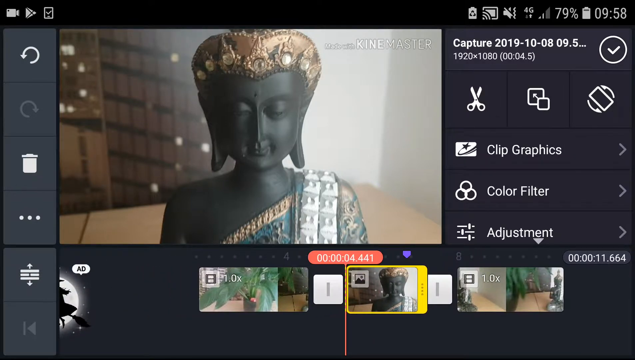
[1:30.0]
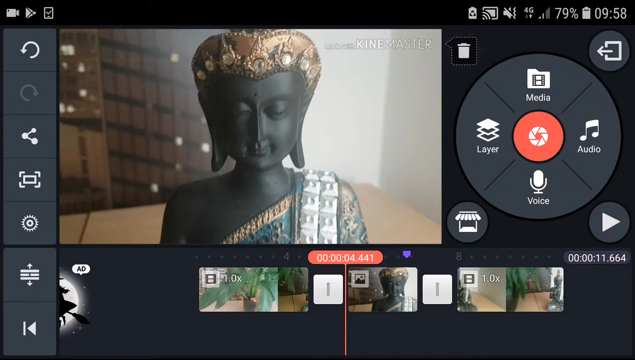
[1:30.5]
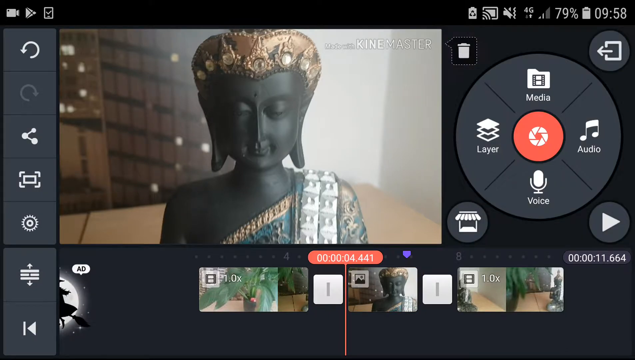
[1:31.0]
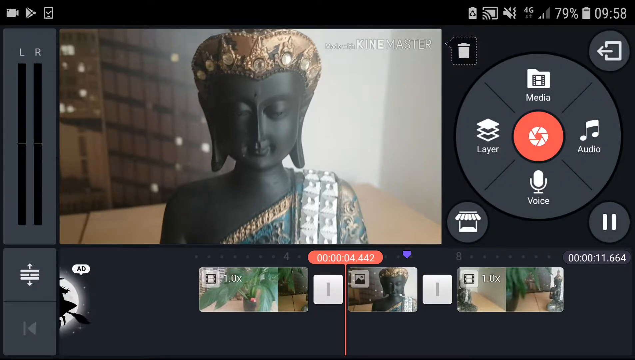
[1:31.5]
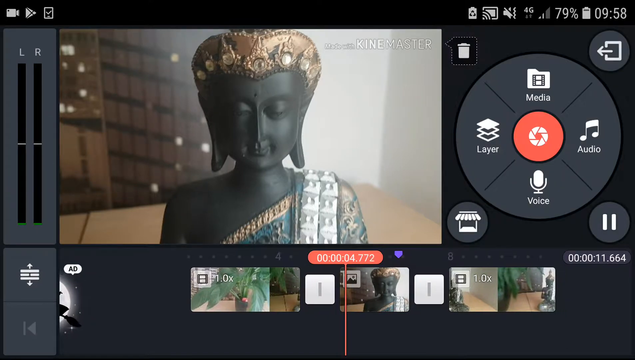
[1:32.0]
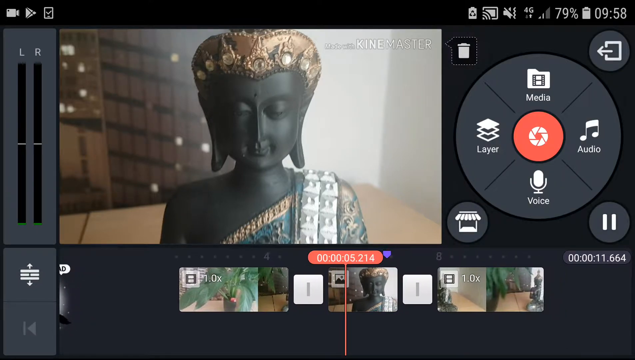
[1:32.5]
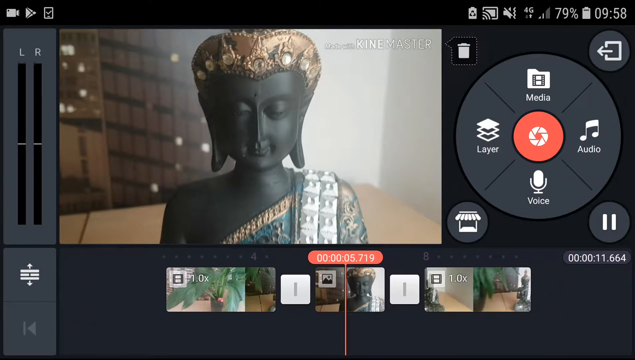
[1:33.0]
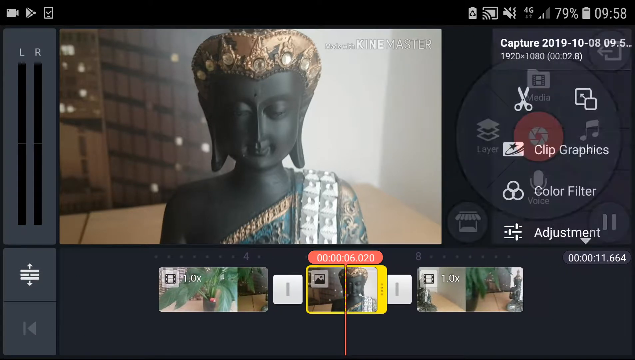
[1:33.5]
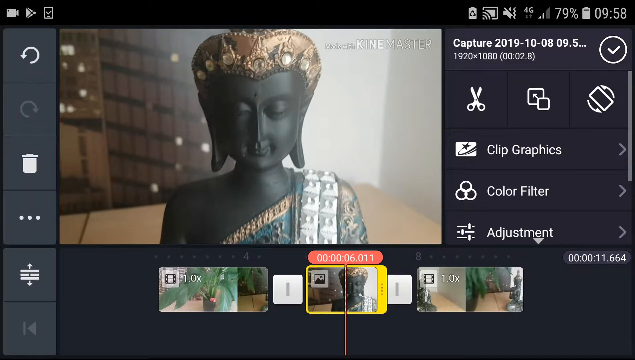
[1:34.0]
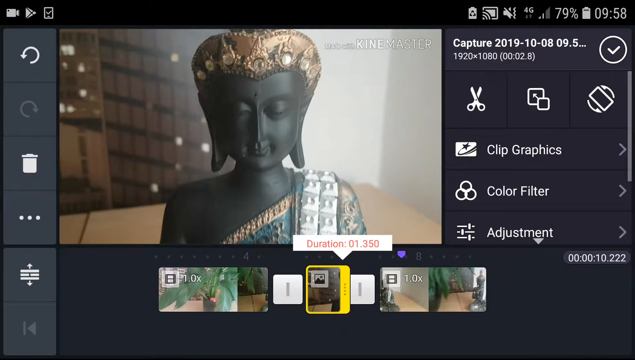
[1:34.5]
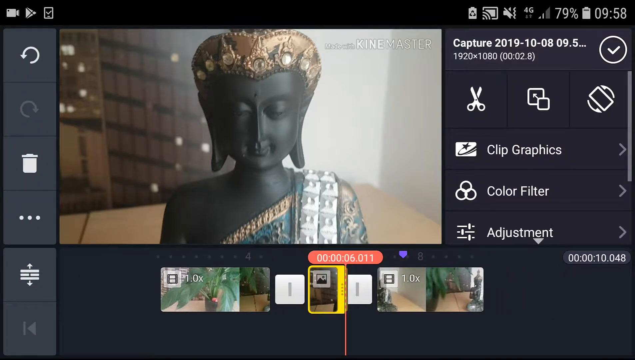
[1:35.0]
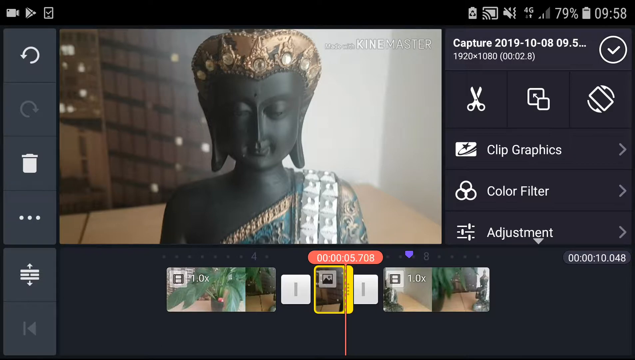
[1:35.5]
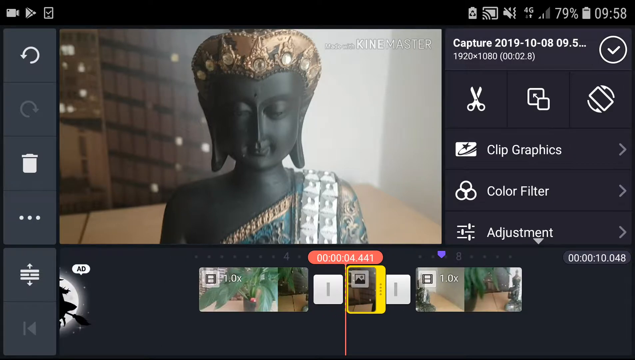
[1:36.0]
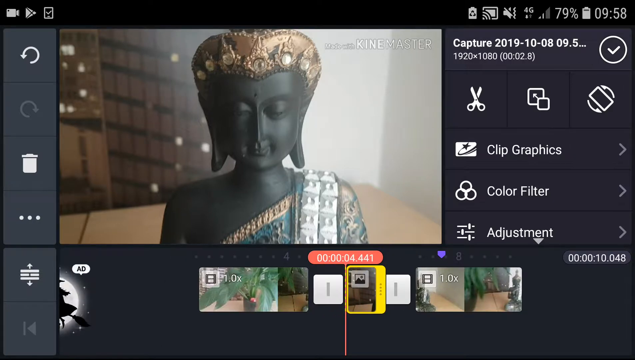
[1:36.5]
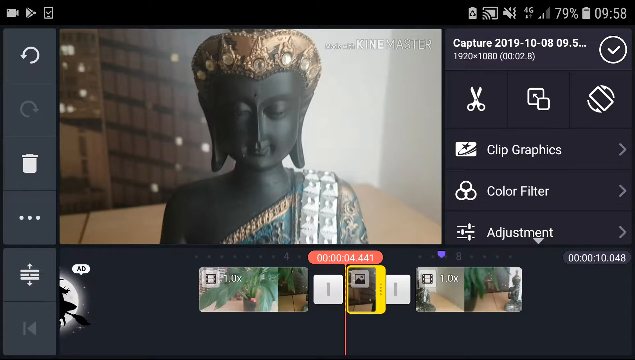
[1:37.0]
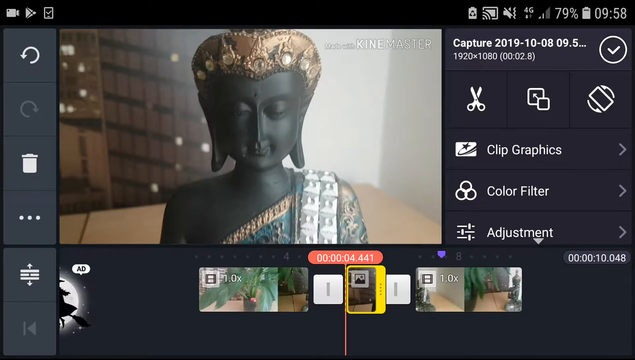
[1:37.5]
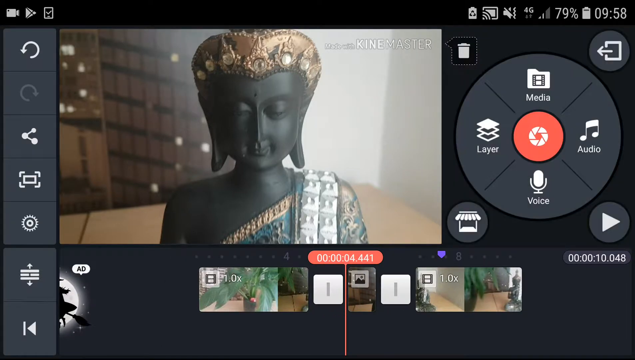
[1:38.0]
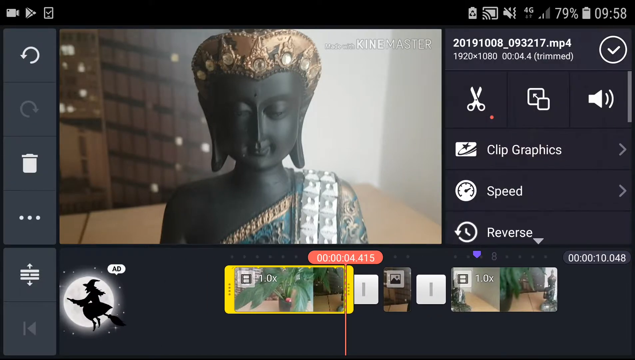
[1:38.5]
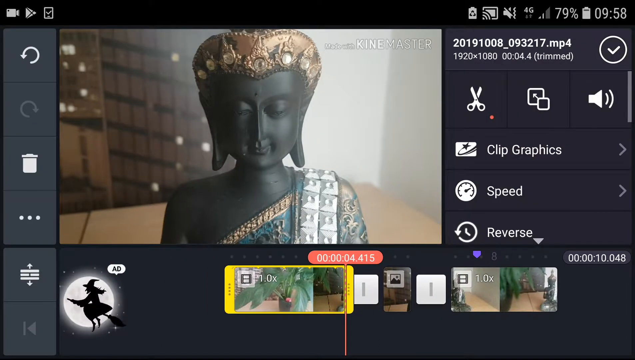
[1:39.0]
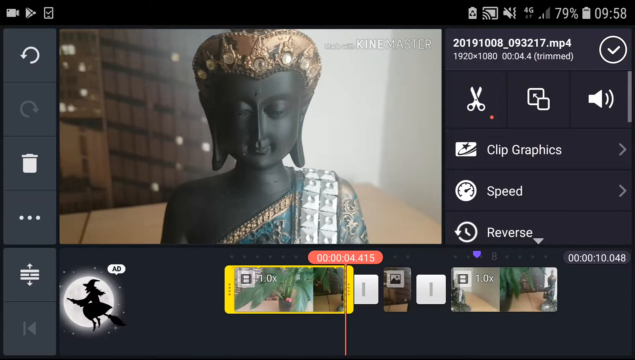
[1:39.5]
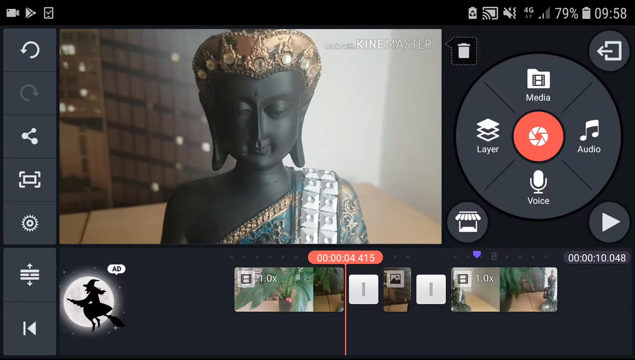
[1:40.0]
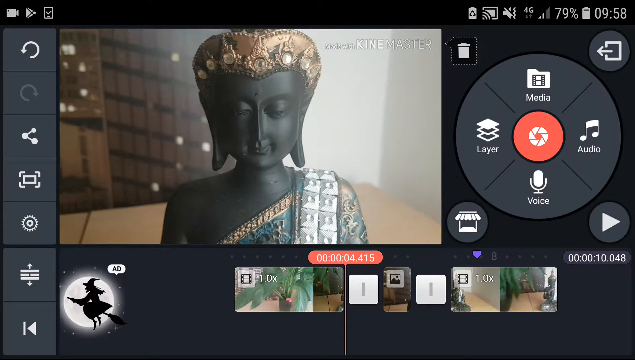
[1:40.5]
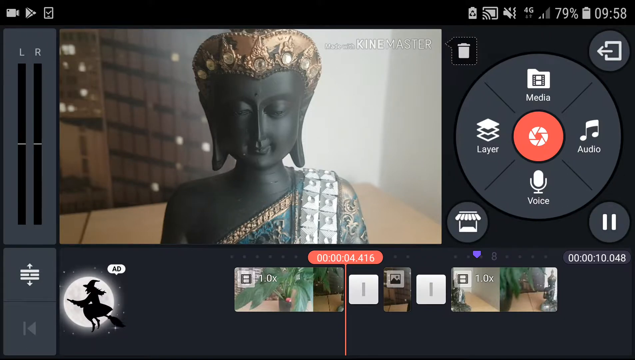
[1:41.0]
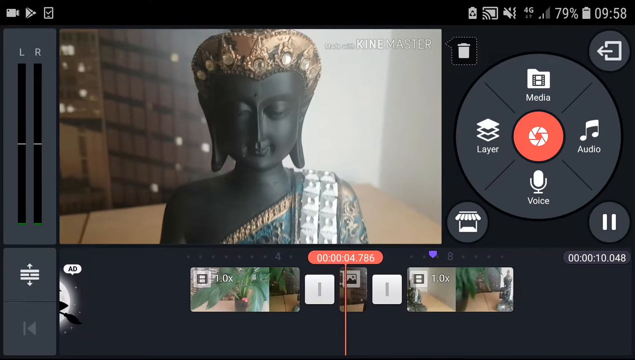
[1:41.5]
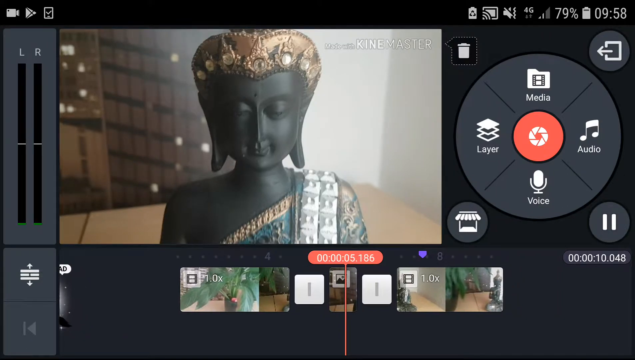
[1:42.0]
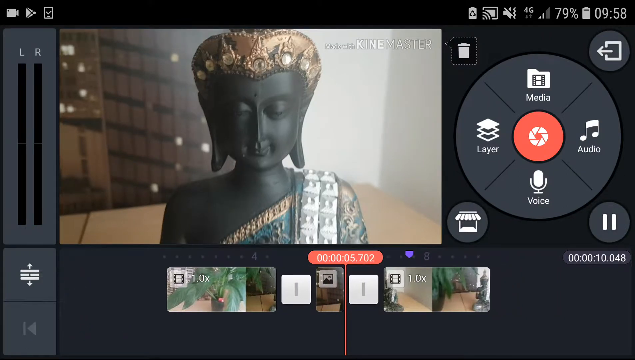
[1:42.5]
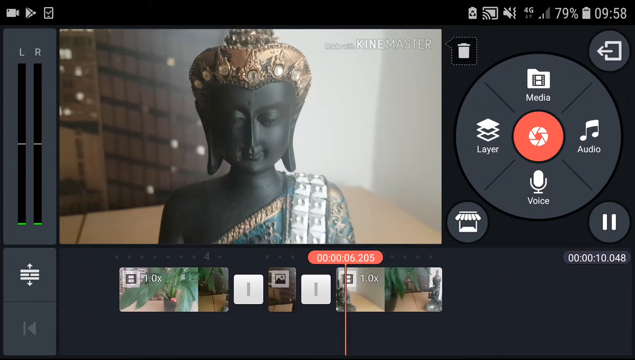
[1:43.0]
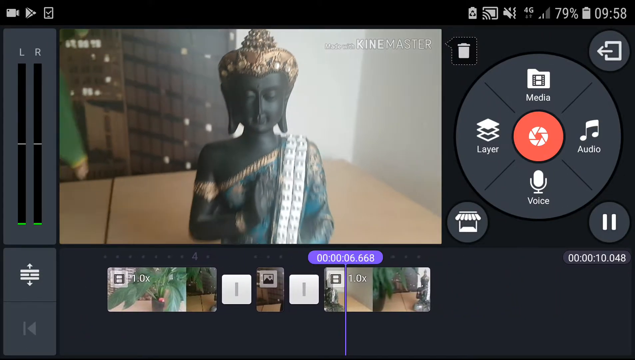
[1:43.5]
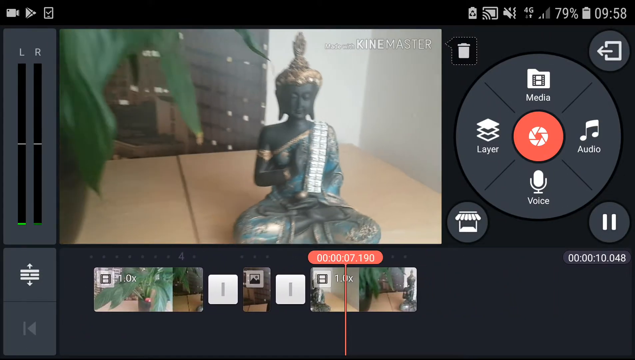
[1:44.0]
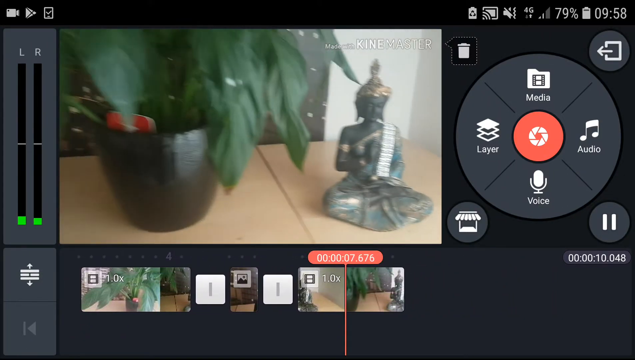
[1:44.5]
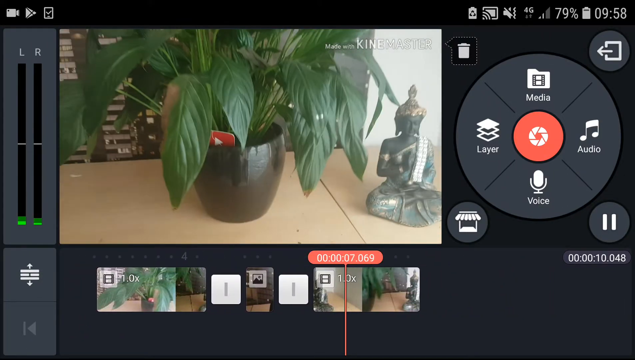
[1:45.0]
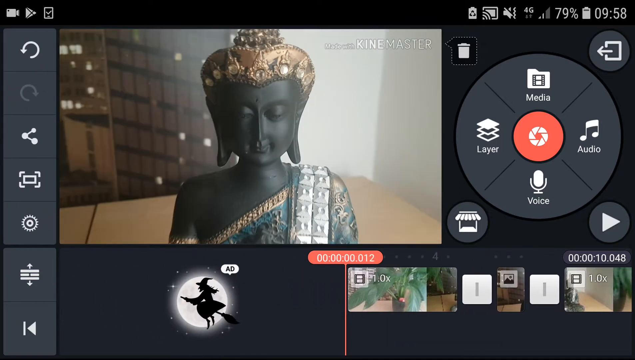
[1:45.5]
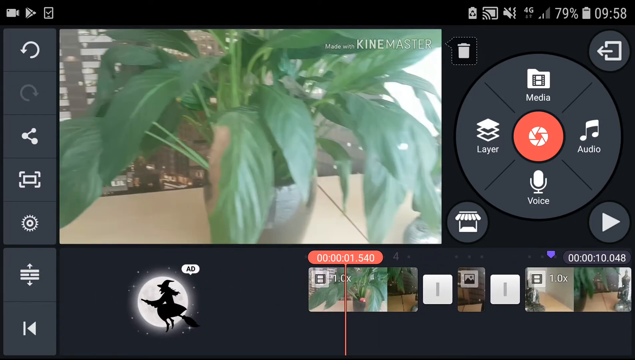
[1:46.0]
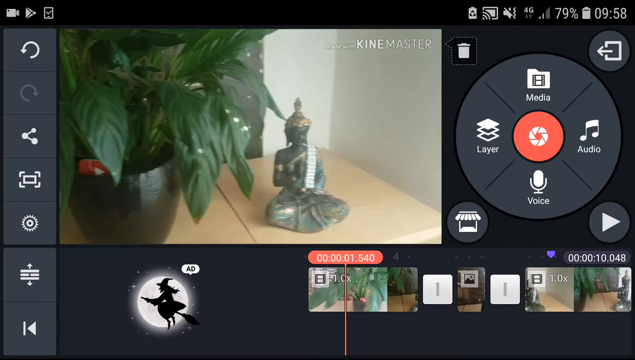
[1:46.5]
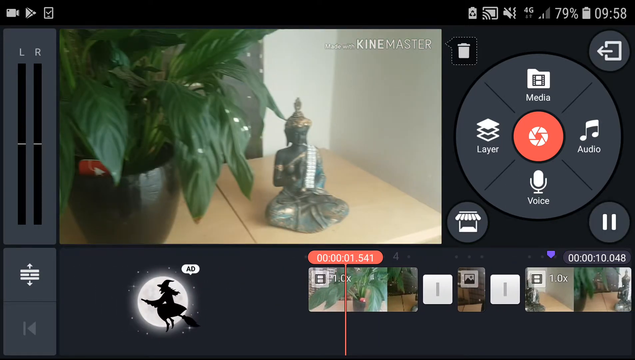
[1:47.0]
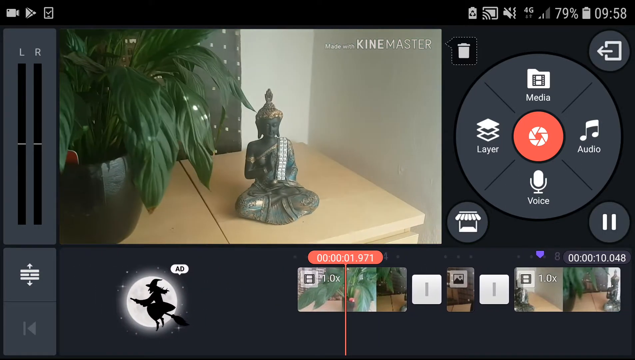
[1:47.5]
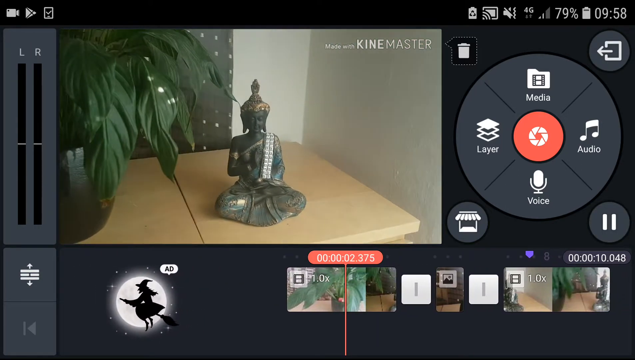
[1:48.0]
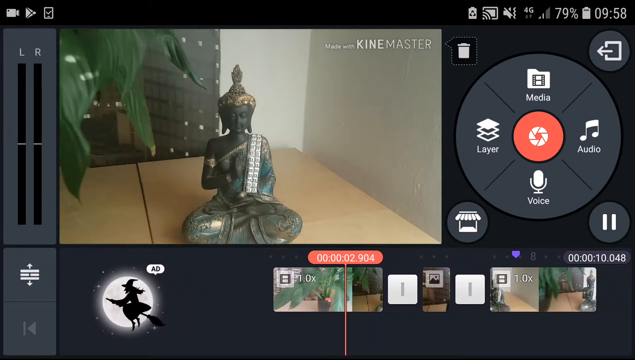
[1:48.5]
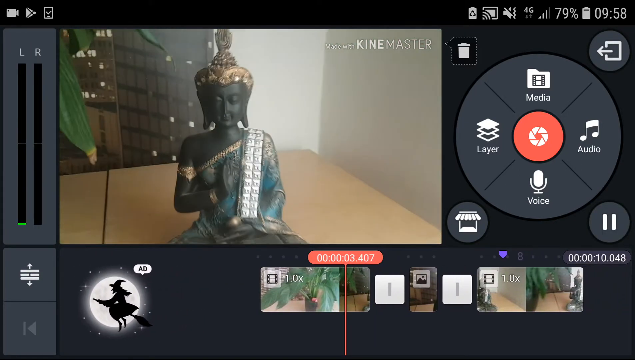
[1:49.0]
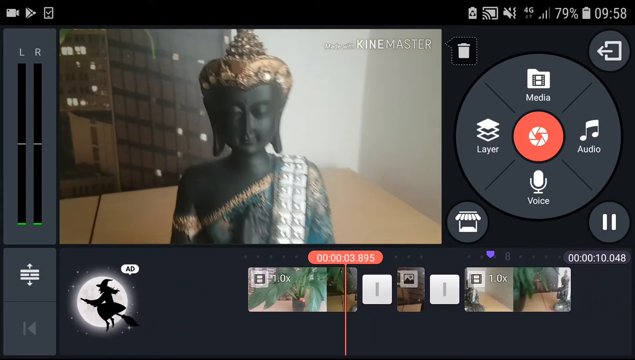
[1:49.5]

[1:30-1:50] On the left side of the screen are a return button, a garbage can and settings, and at the bottom left the little witch on her broom that says "an ad" is barely visible. The video is frozen on a frame of the doll with the gold crown; the doll is black and has a blue dress with a silver thing on it. On the left side it says "capture 2019 10 8", and there is a pair of scissors along with "clip graphics", "color filter" and "adjust". The time is now 9:58 p.m. The user goes back to the screen with the circle and "layer", adjusts the clip of the doll, returns to the first view and zooms back out. They may be shortening some of the frames so the video does not stay on the doll too long. The view zooms out, zooms back in, and ends on the black doll with the gold crown and the blue dress with the silver thing on it.